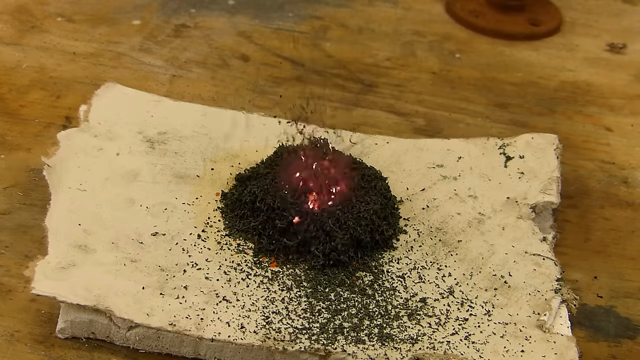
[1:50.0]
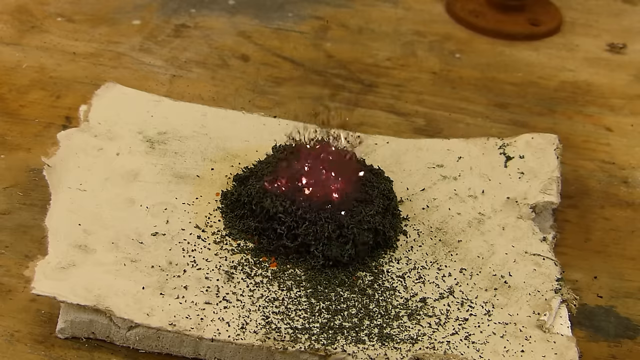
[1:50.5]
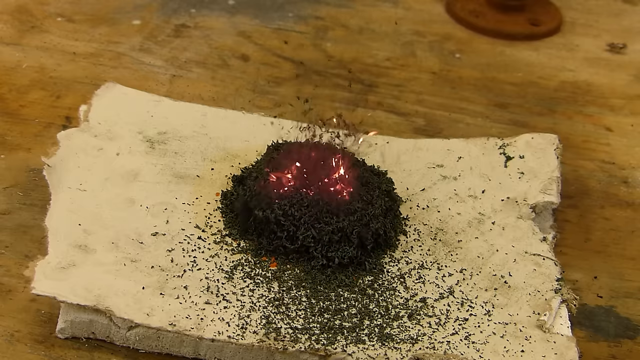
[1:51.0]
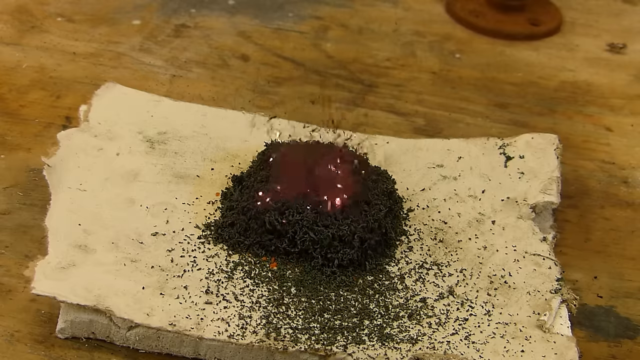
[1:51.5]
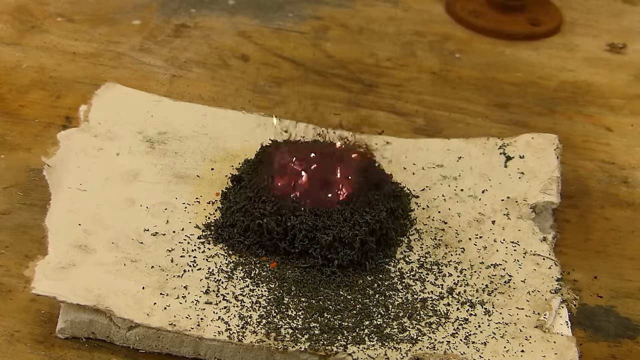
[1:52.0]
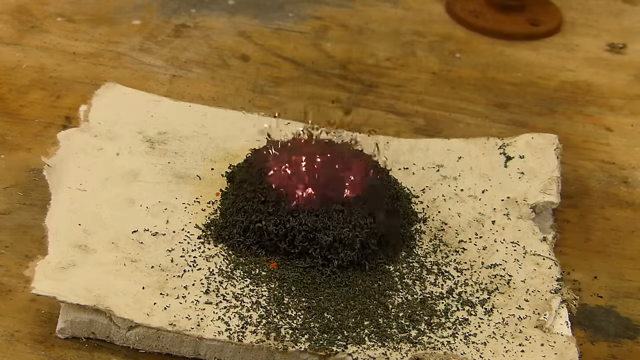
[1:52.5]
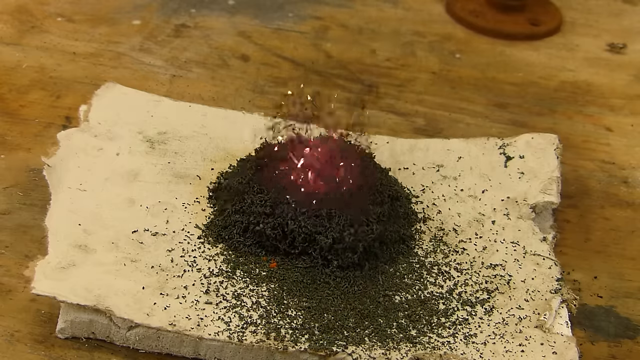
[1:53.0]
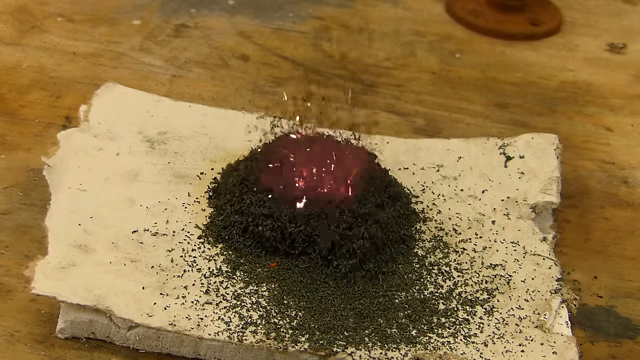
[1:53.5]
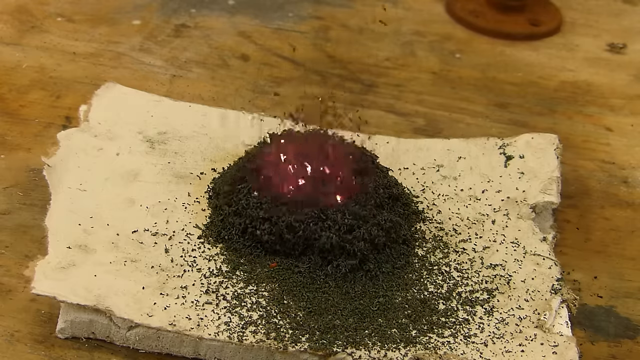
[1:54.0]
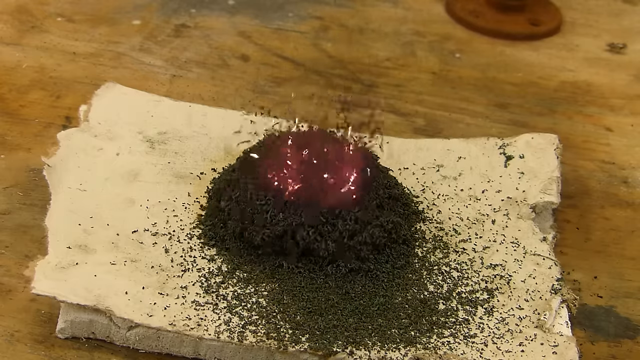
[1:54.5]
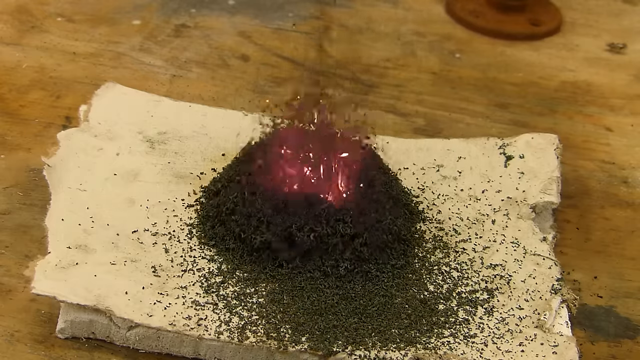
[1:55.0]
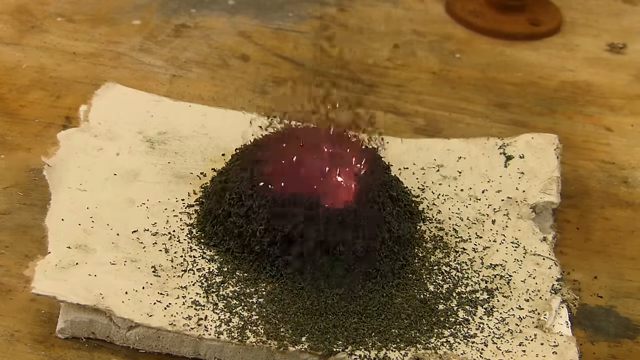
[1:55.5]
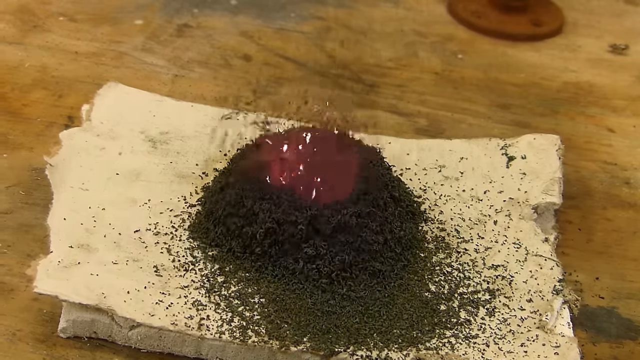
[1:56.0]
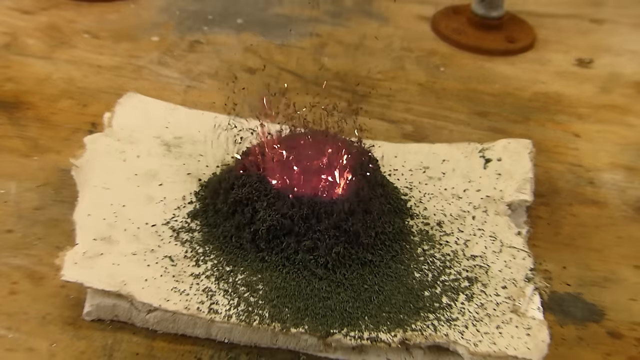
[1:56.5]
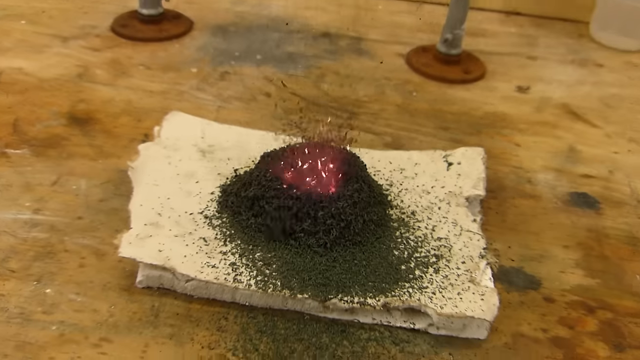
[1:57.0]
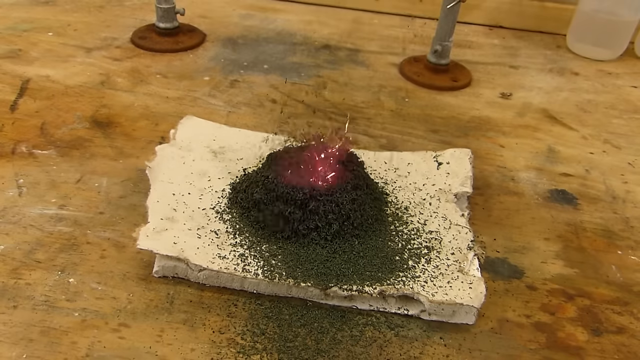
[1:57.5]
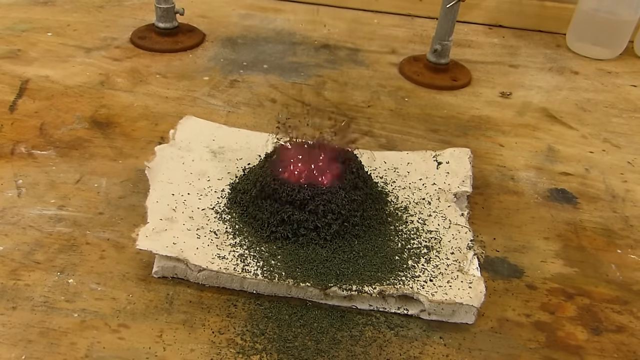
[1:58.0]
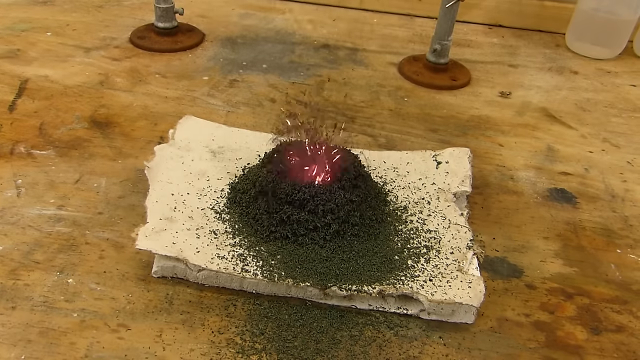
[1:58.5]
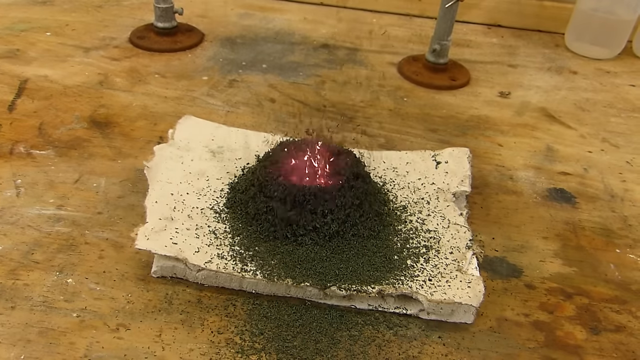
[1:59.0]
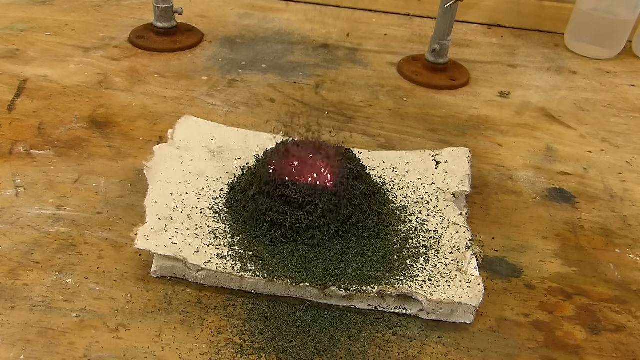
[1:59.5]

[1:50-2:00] The orange pile is actively turning black; it is more black than orange, with very few orange pieces left. The middle looks like a volcano, with red fire spiking out and turning black as it spikes out. The volcano fire gets bigger and bigger until it kind of flattens the pile down quite a bit; the pile is wider, and there looks like more of the substance than before.